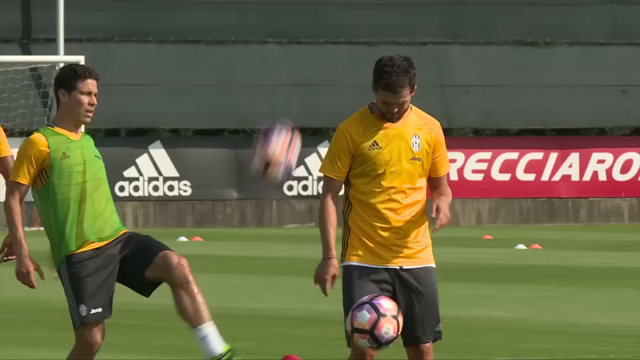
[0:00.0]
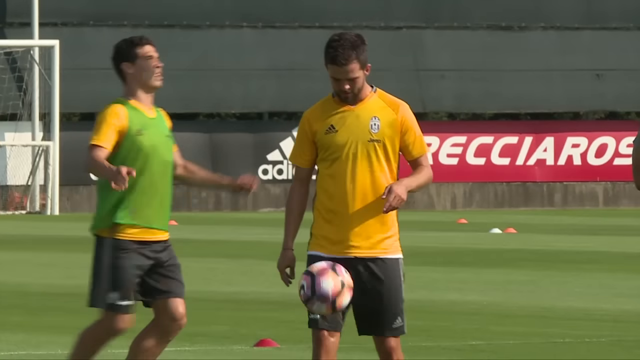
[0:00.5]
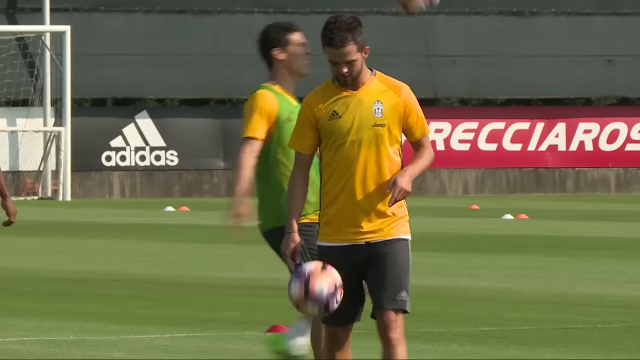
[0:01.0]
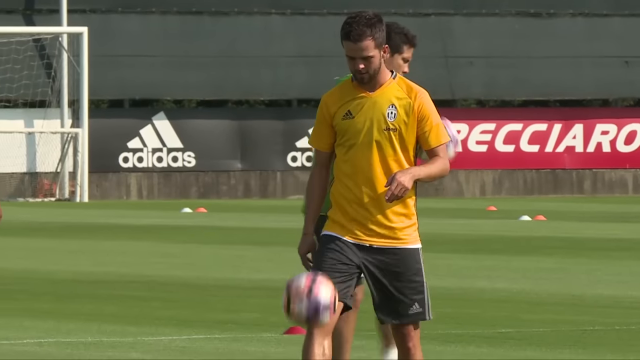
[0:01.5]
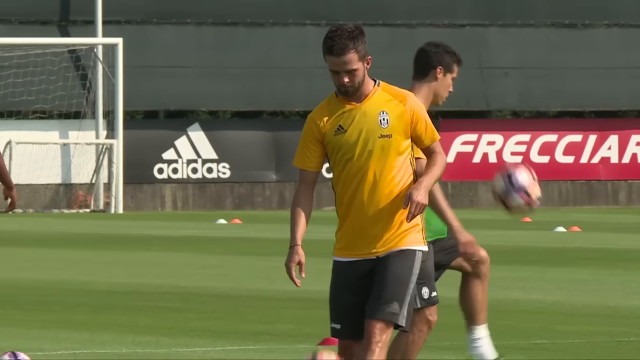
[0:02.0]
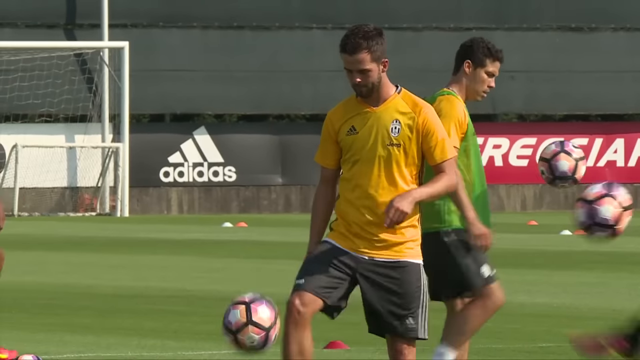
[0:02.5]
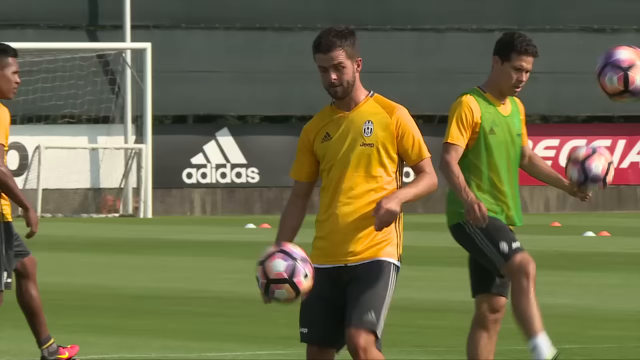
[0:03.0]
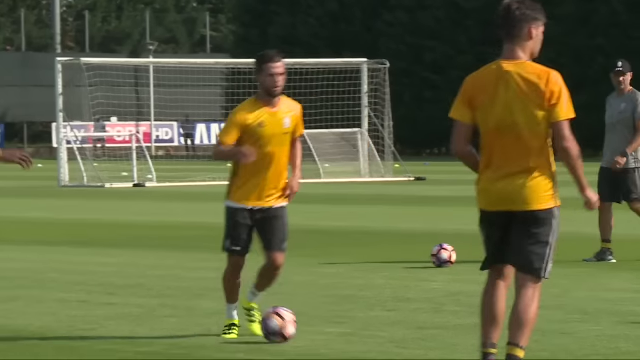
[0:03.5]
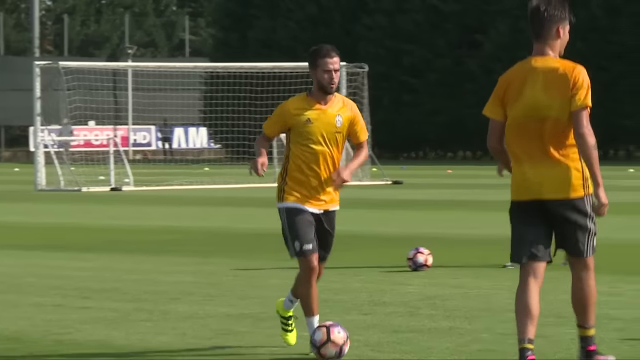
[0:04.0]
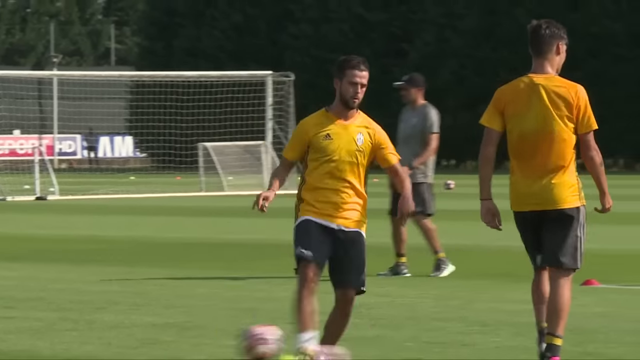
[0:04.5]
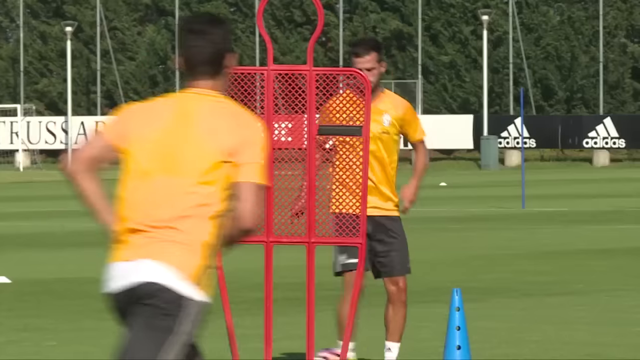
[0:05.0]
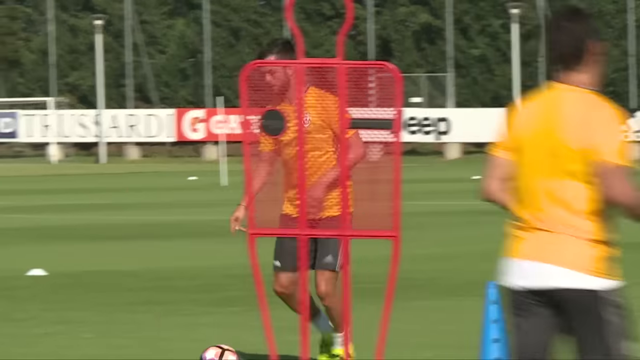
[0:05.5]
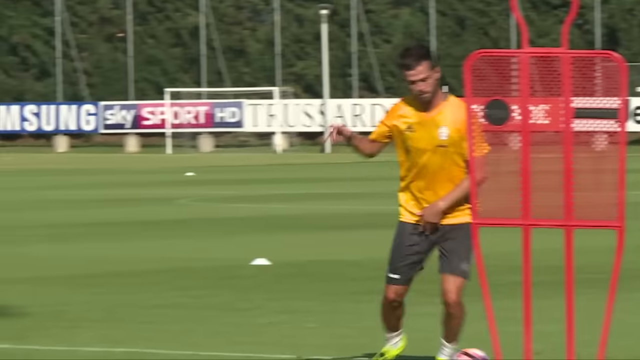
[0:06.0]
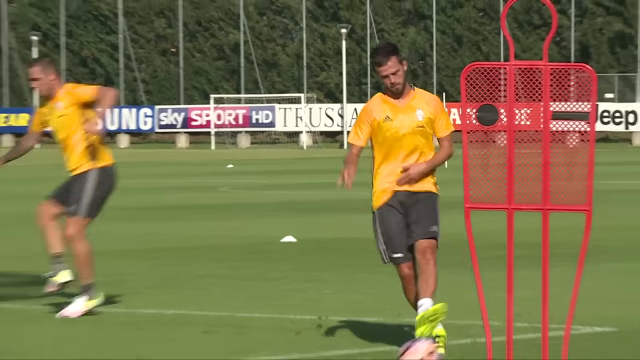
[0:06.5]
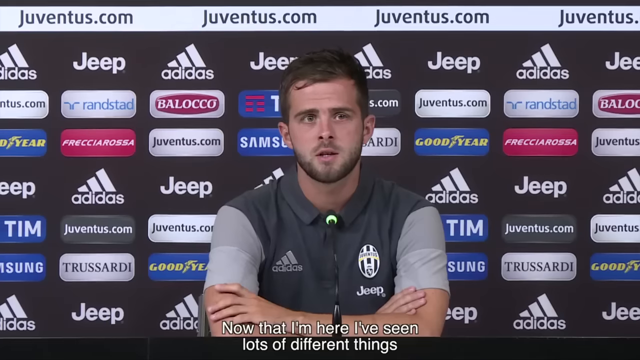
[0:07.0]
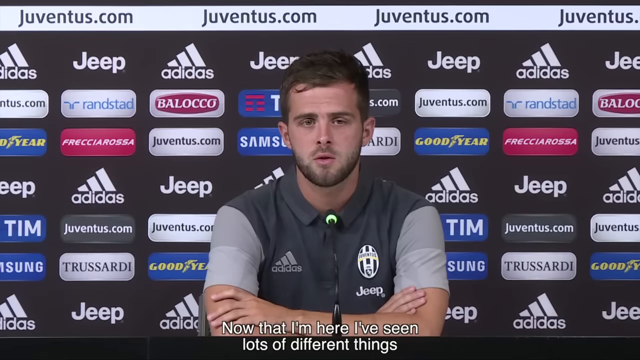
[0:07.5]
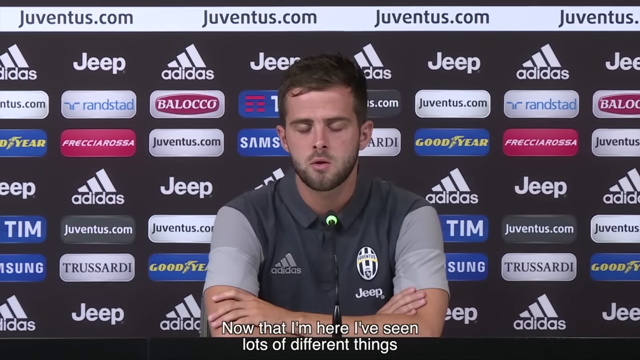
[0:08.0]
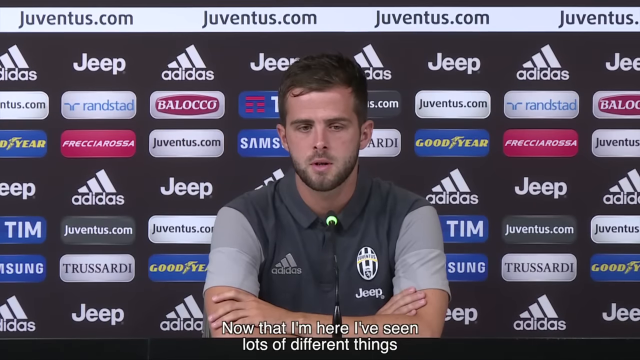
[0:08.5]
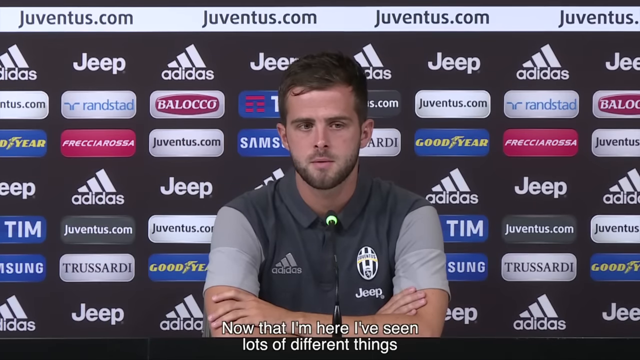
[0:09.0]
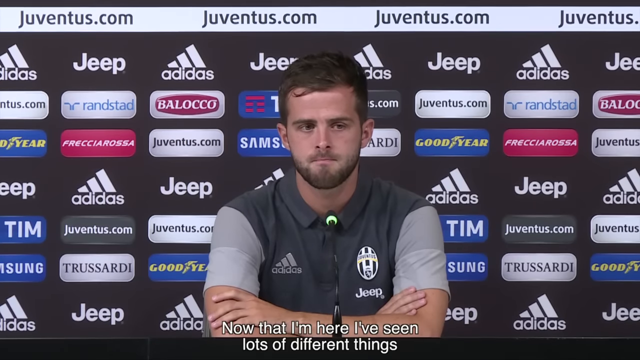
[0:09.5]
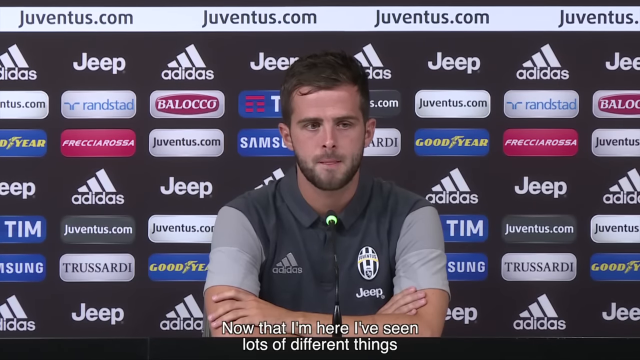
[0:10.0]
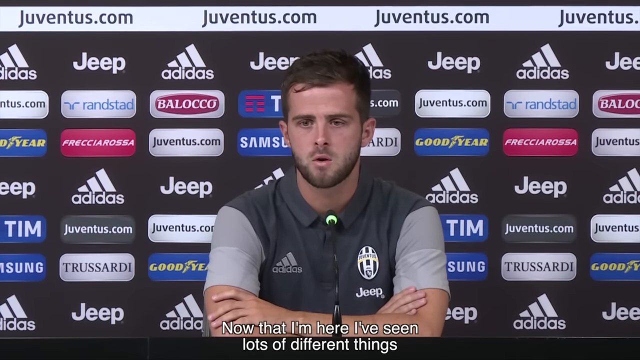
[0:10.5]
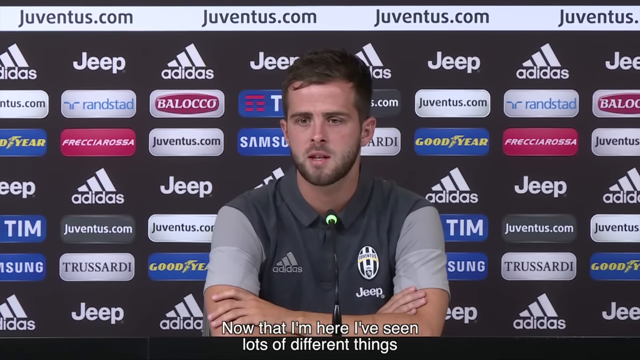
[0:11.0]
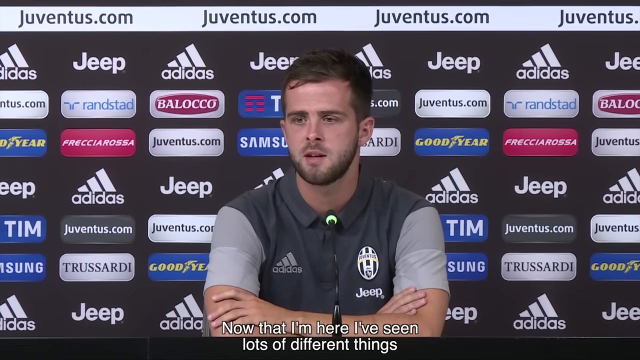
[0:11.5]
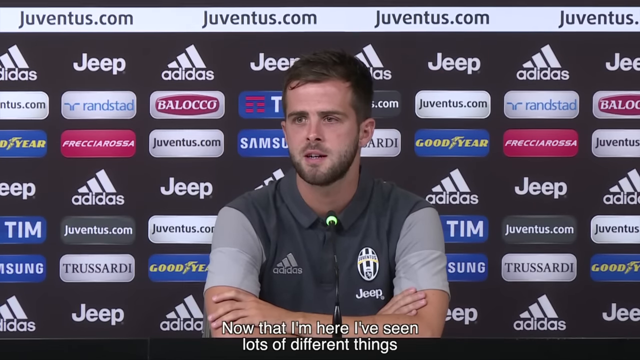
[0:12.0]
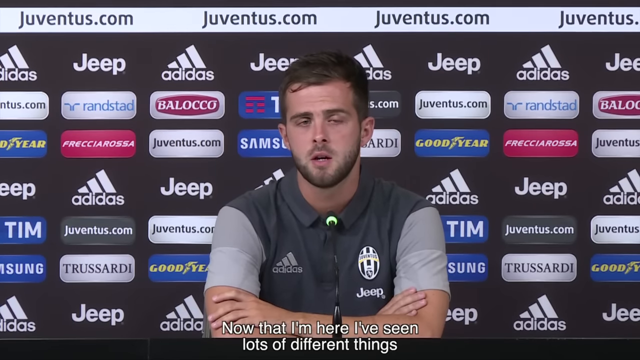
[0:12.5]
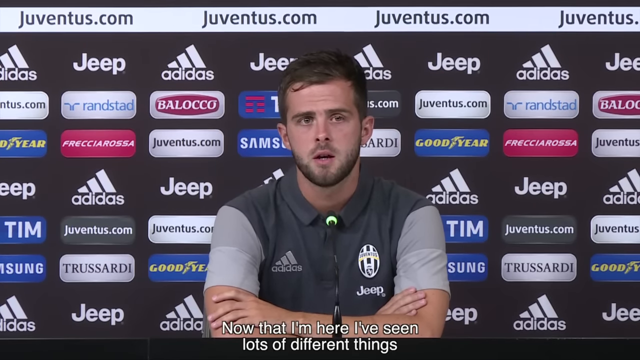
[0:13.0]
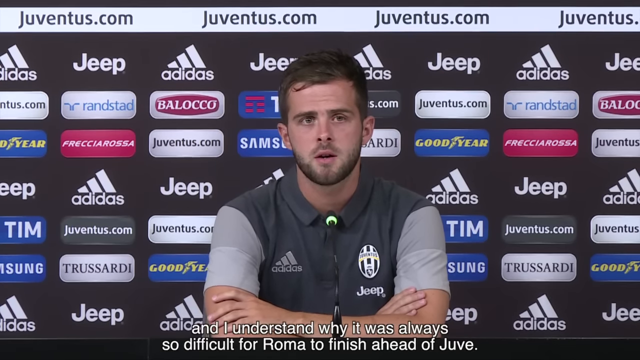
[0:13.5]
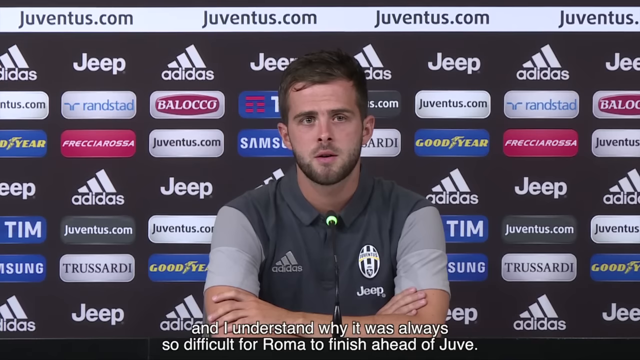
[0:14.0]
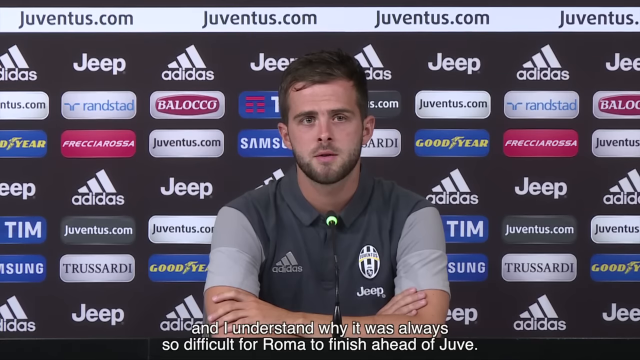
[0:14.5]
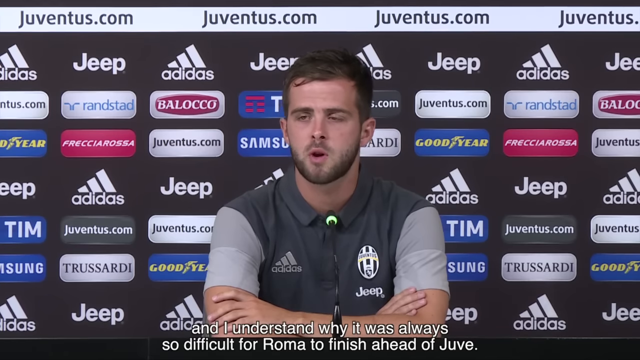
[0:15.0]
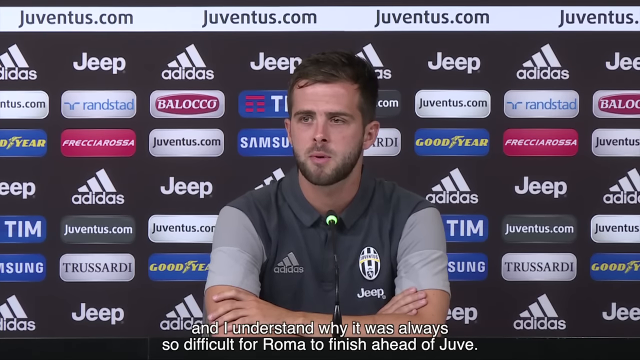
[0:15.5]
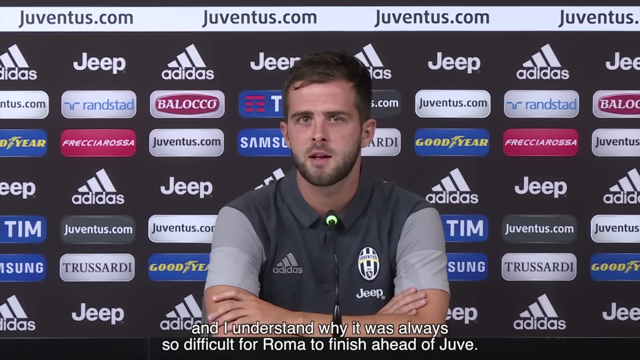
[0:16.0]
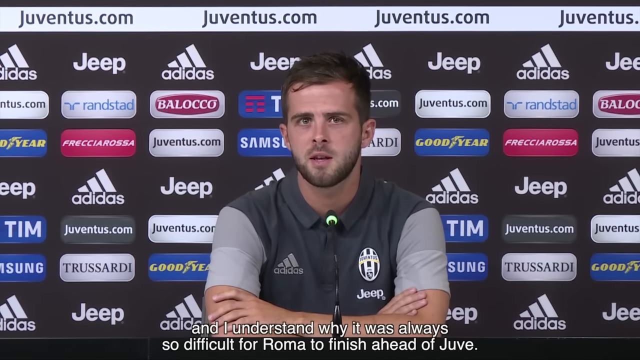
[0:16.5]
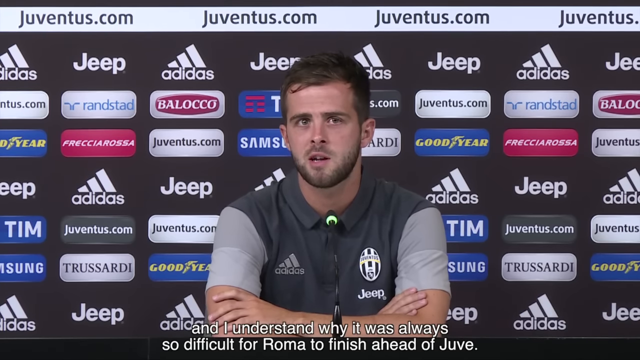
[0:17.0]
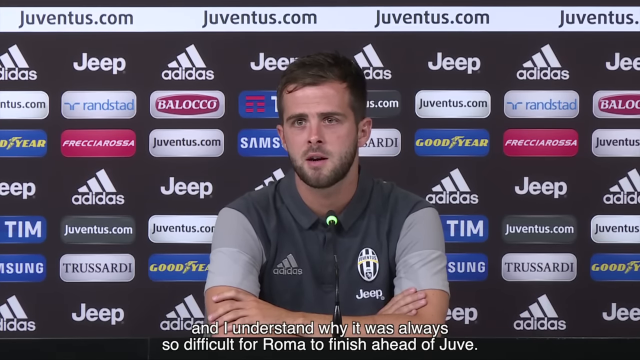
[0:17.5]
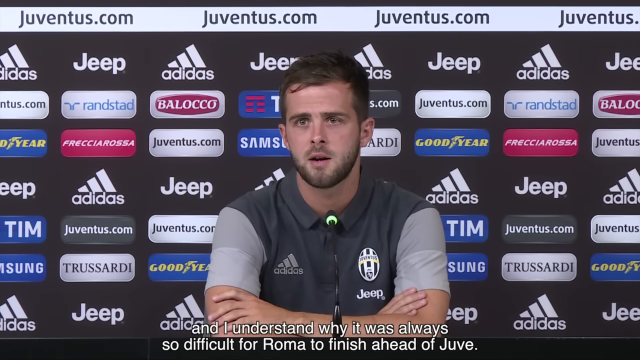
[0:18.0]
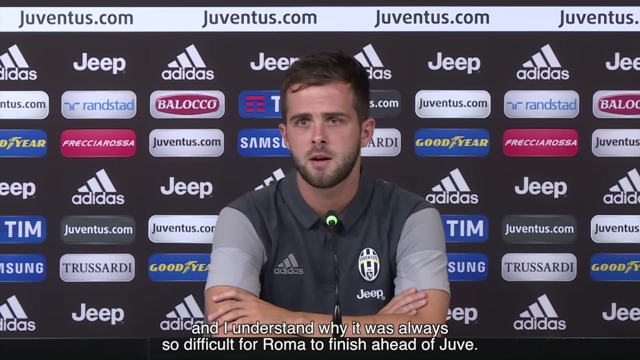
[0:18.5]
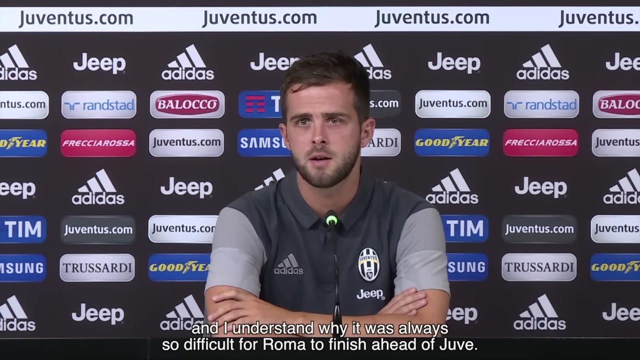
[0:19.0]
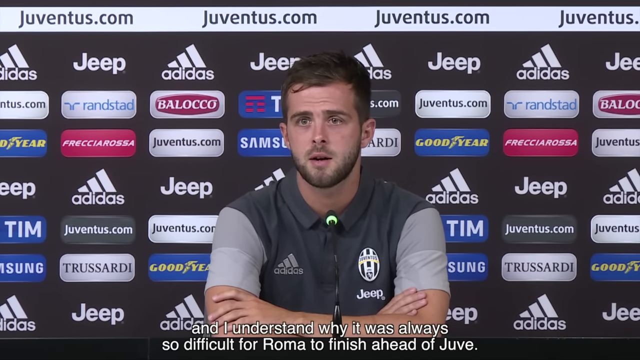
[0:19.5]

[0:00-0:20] The scene is outdoors, apparently on a soccer field with green grass. A black background shows an Adidas logo and another logo that cannot be made out. Several male soccer players in black shorts and yellow jerseys run around on the field, with the camera fairly close up to a couple of them. One player has a green mesh practice jersey layered over his yellow jersey. The players dribble soccer balls off their feet and chests, running around and kicking. White soccer goals stand in the background and a red one is in the foreground. After a few seconds, the camera pans to a man sitting at a podium giving a press conference, with a microphone in front of him. He has black hair and a black beard and wears a black Adidas shirt with a logo on it. Behind him is a wall listing many different sponsors, such as Jeep, Adidas, Goodyear and many others.